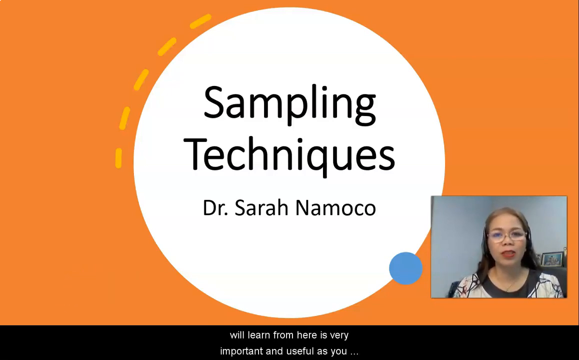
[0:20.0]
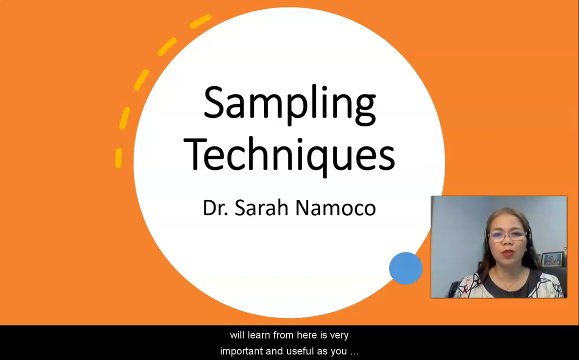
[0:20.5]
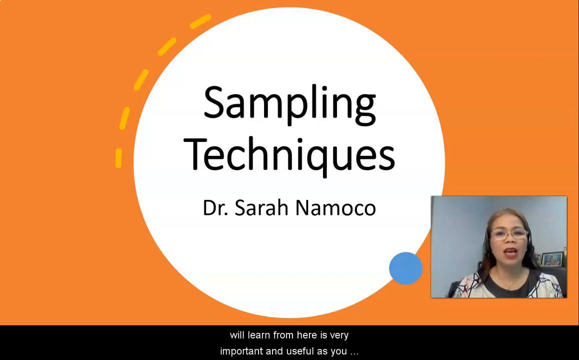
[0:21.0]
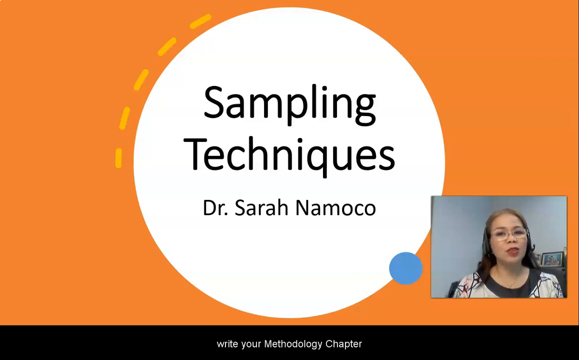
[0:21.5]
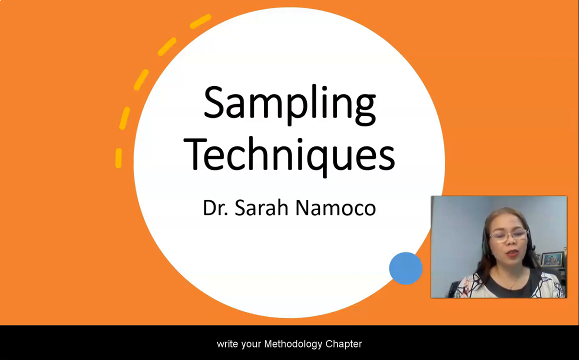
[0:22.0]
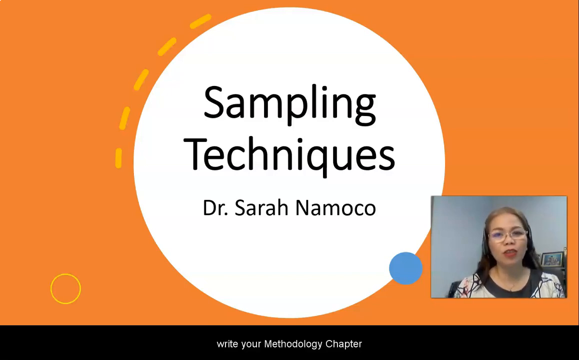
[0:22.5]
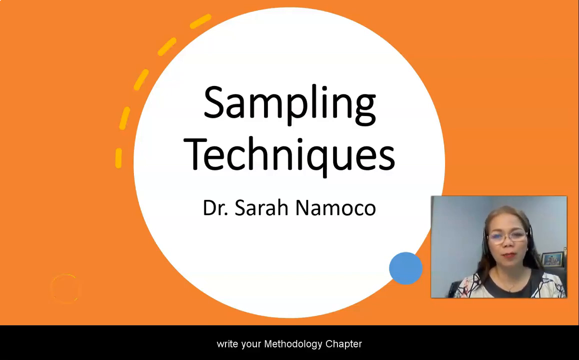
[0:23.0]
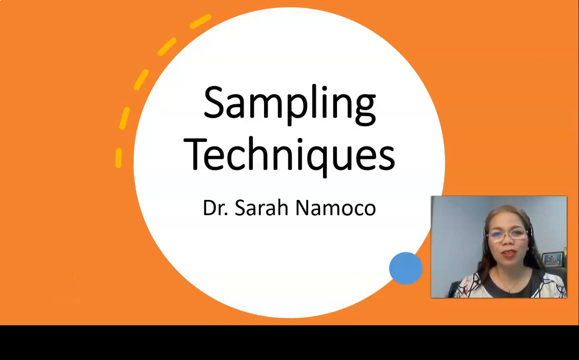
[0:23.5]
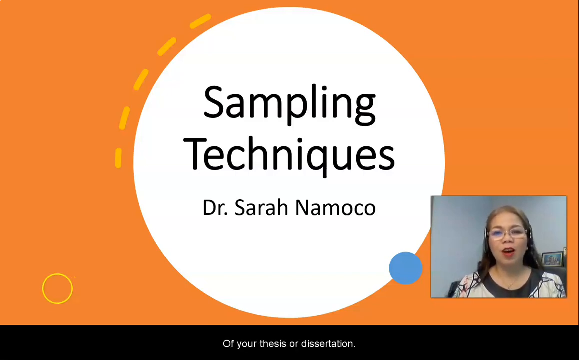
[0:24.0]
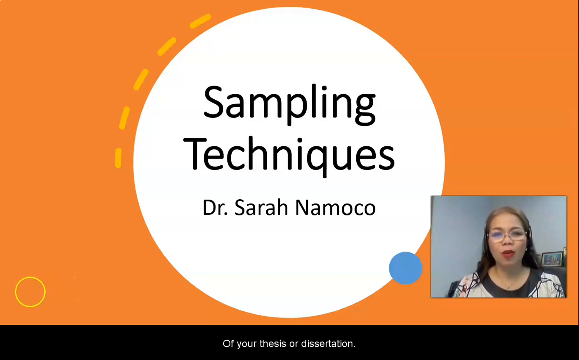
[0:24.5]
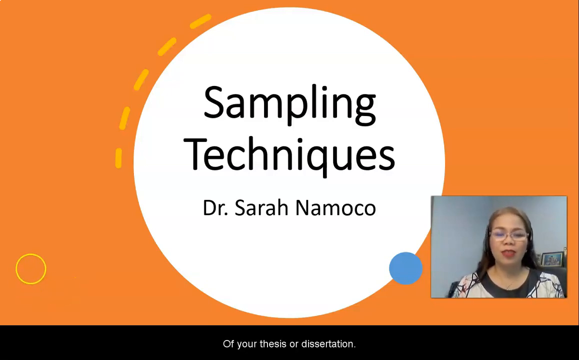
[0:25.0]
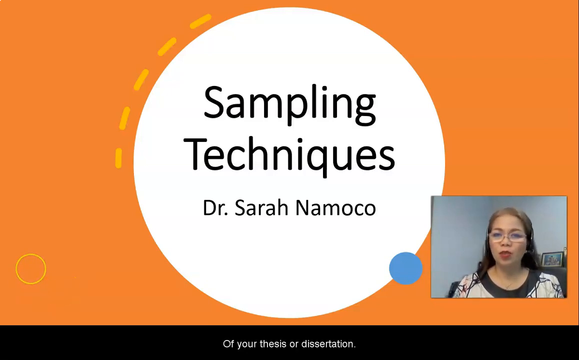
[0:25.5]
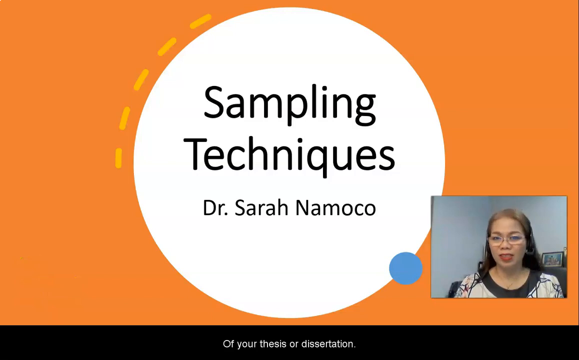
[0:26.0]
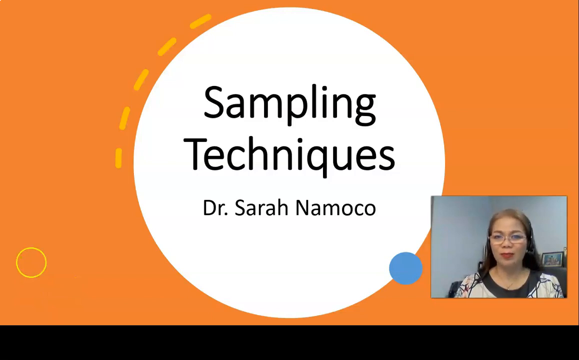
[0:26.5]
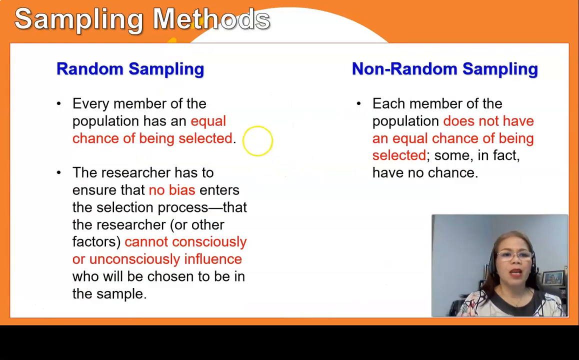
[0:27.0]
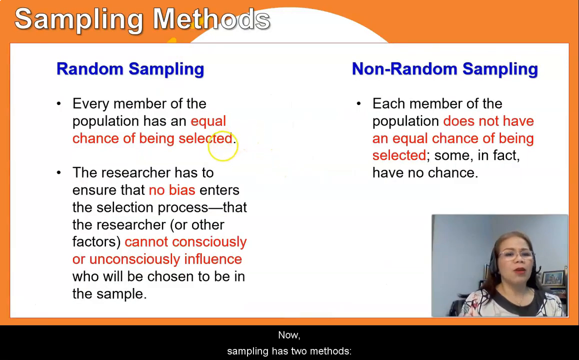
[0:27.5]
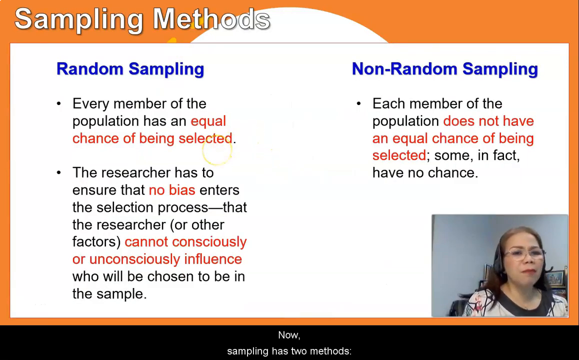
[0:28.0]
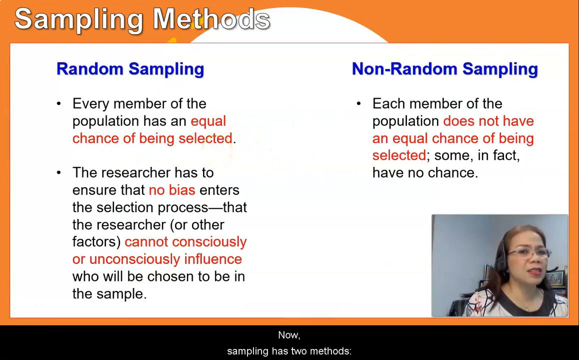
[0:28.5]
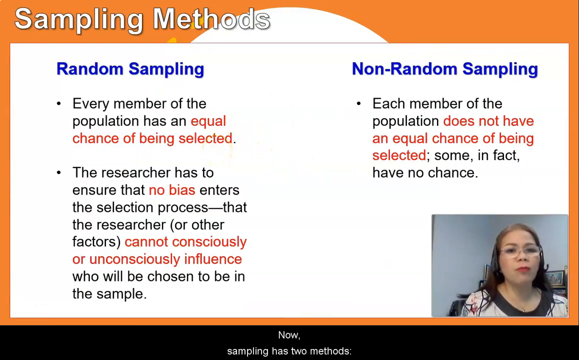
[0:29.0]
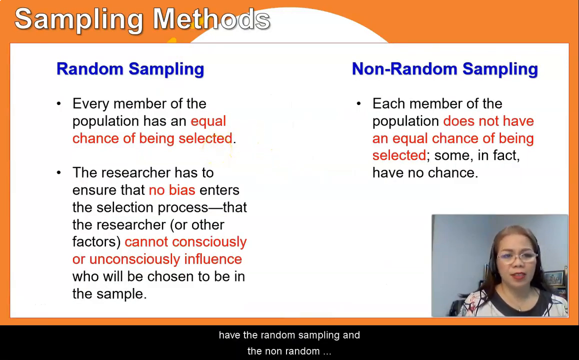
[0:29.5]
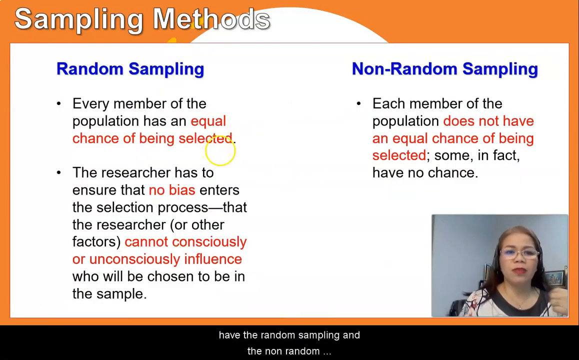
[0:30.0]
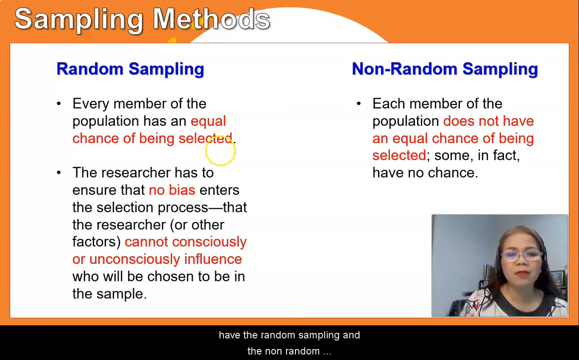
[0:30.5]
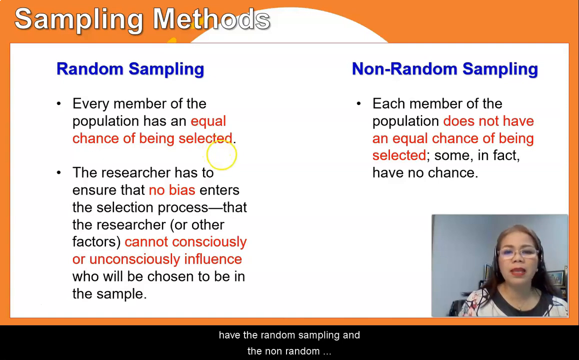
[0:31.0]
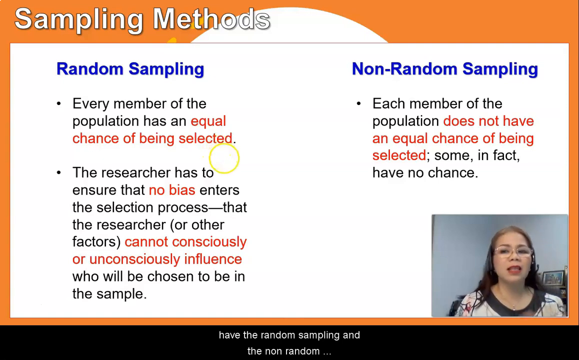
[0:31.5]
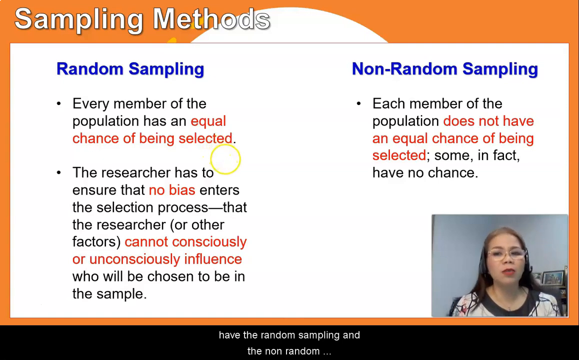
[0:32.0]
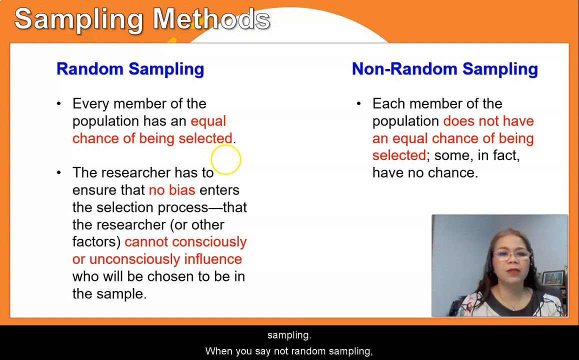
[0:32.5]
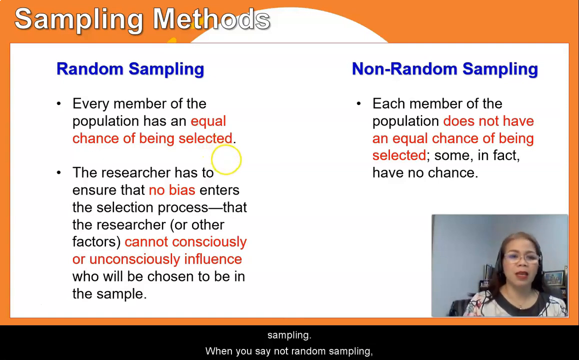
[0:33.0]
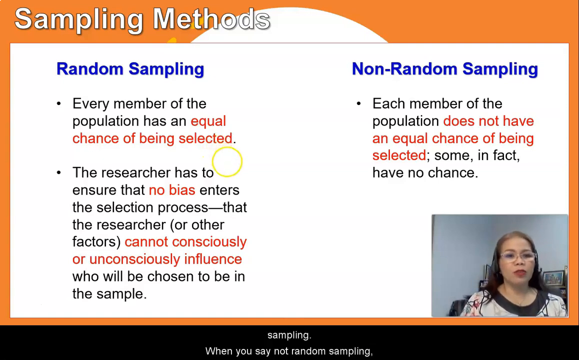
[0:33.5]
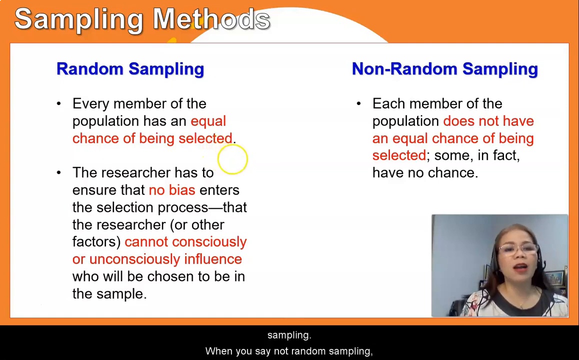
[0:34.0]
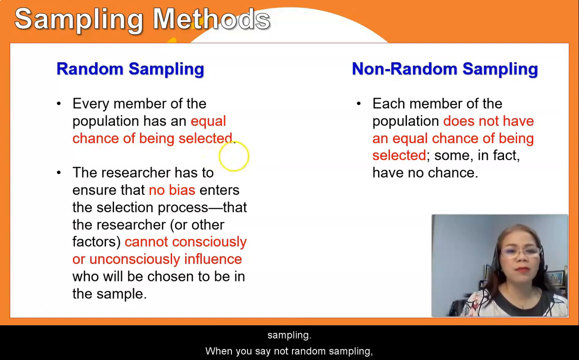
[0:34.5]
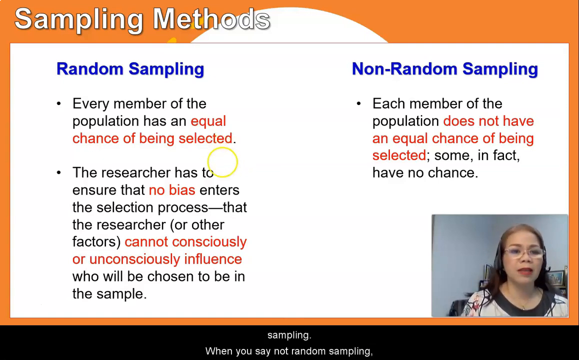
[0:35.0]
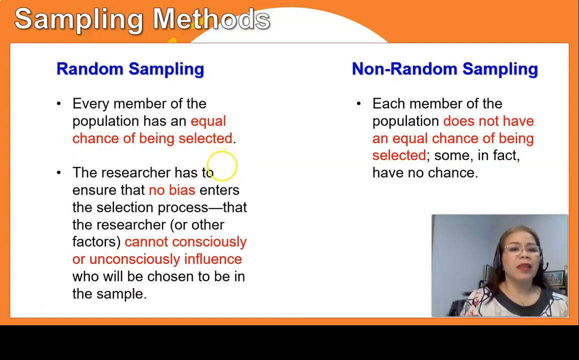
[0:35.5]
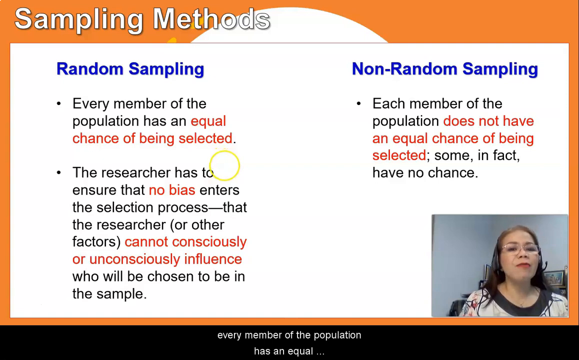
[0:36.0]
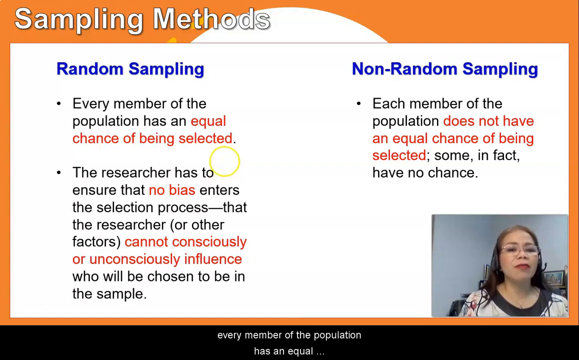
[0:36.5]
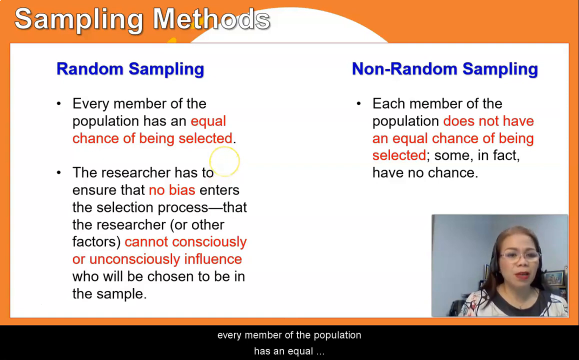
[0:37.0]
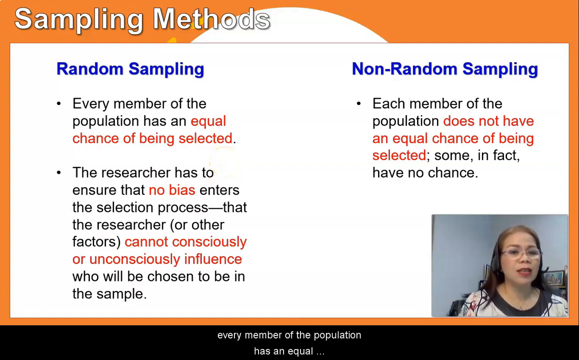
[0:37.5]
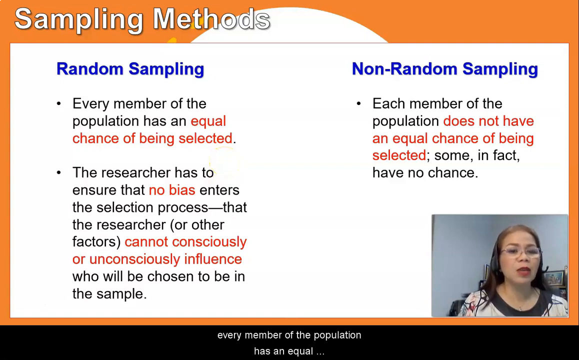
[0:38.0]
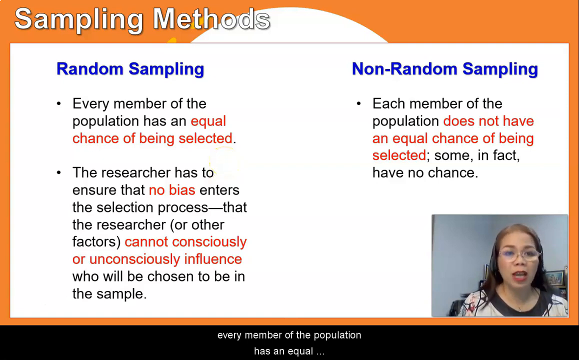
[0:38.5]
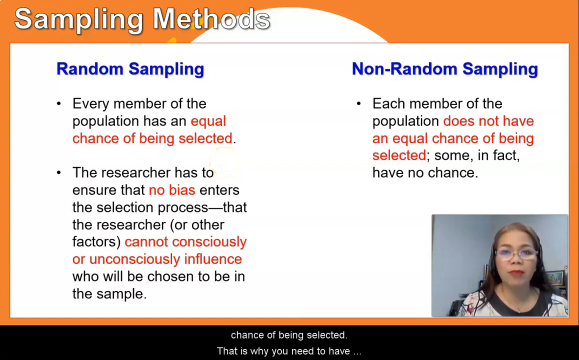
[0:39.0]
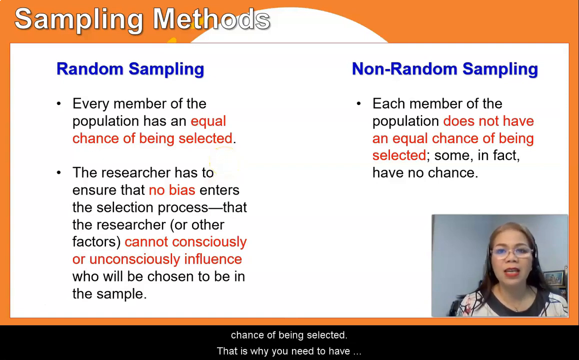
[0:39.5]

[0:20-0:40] The orange background with the large white circle remains, with black text inside reading "Sampling techniques, Dr. Sarah Nomoko." The webcam overlay in the bottom right corner shows Dr. Sarah sitting in her room with some framed images behind her along a desk; she wears a white blouse and speaks to the camera. Only the area above her shoulders is shown, her arms are not visible, and her body moves slightly. The slide advances to one titled "Sampling methods" in white text, with the subtitle "Random sampling" on the left side of the screen and "Non-random sampling" on the right. The bullet point under Non-random sampling is shorter than the two bullet points under Random sampling on the left, which take up the entire length of the screen. The bullet point text is in black and orange, with the orange seemingly marking text highlighted for visibility. The yellow ring cursor is visible on the left side of the screen, highlighting over some of the text. Dr. Sarah keeps speaking, moving slightly, and her left fingers are shown very briefly as she reaches above the camera line. Along the bottom of the screen, a black bar shows white captions of what she is saying.